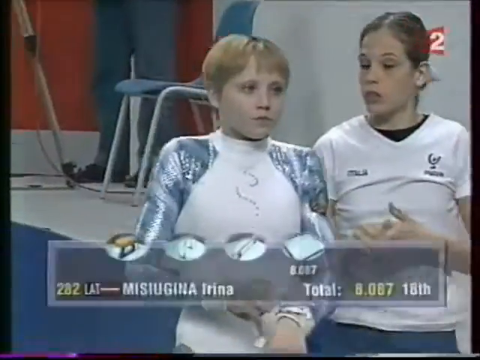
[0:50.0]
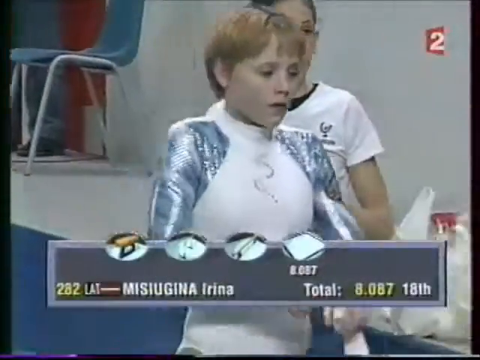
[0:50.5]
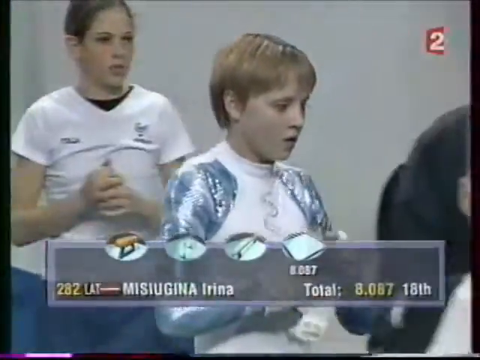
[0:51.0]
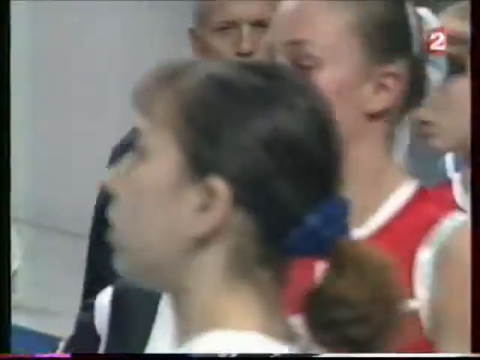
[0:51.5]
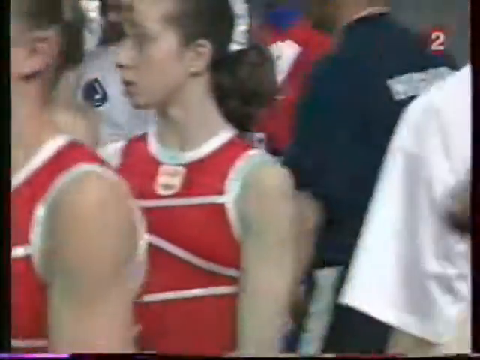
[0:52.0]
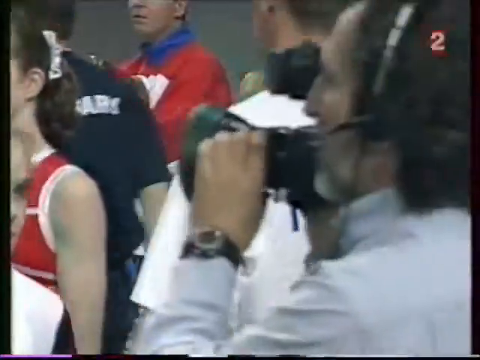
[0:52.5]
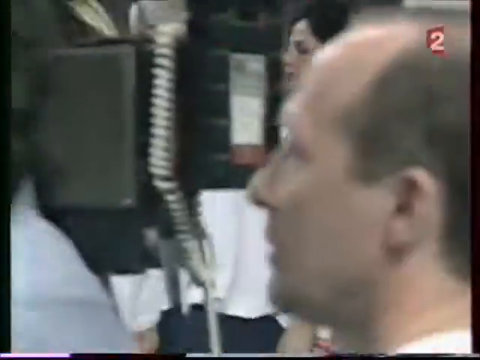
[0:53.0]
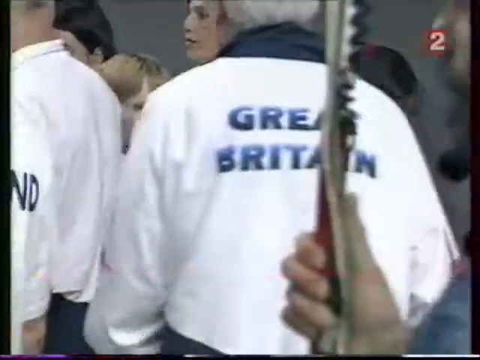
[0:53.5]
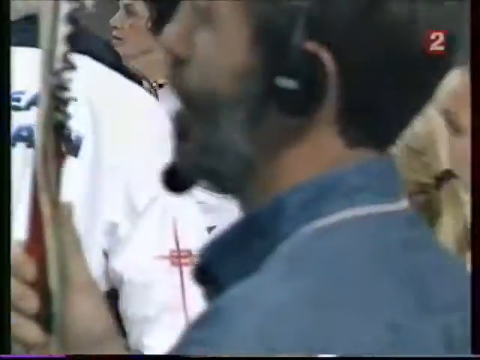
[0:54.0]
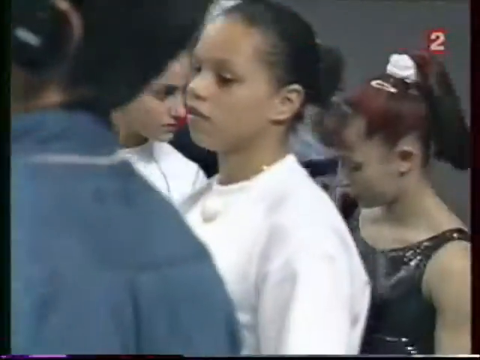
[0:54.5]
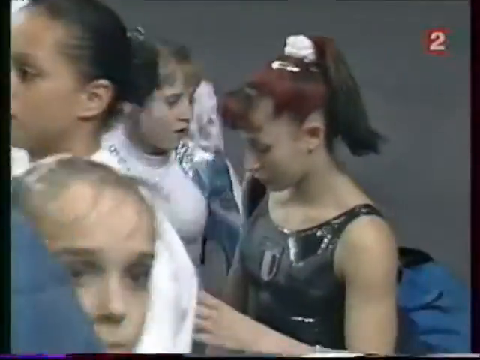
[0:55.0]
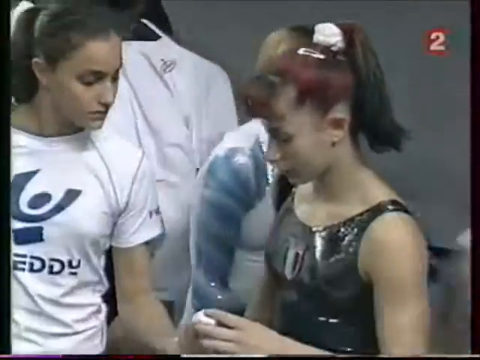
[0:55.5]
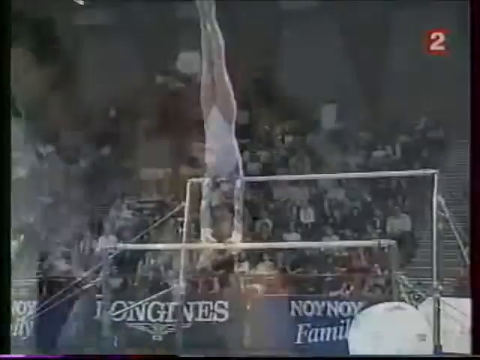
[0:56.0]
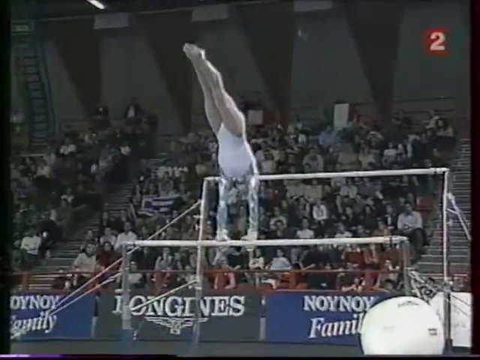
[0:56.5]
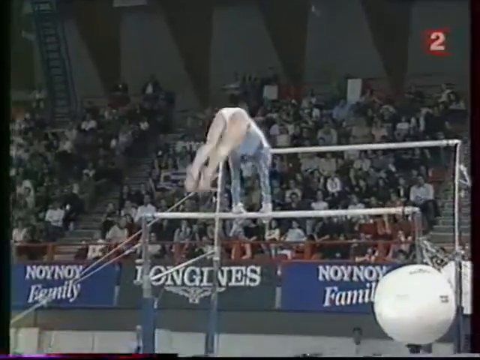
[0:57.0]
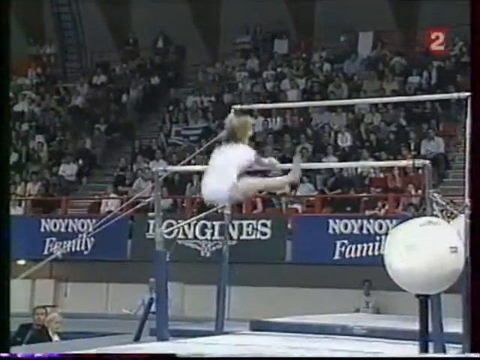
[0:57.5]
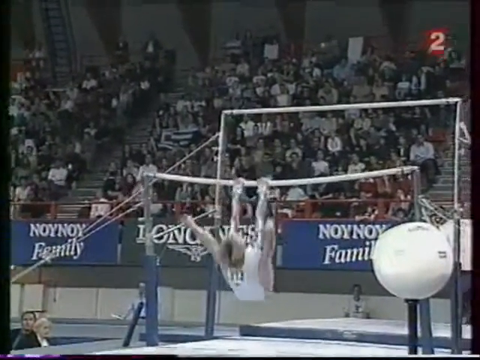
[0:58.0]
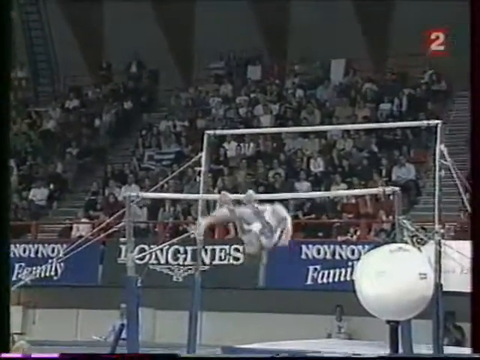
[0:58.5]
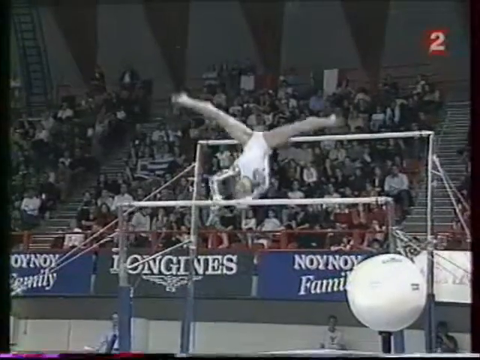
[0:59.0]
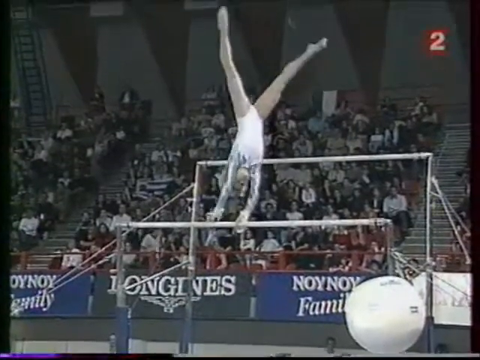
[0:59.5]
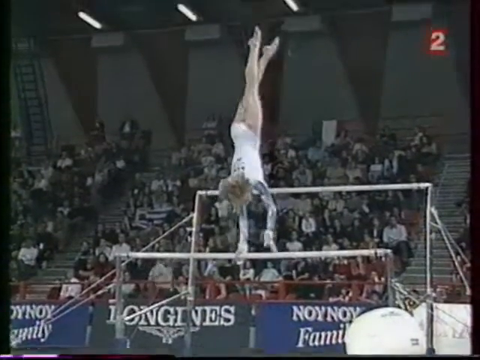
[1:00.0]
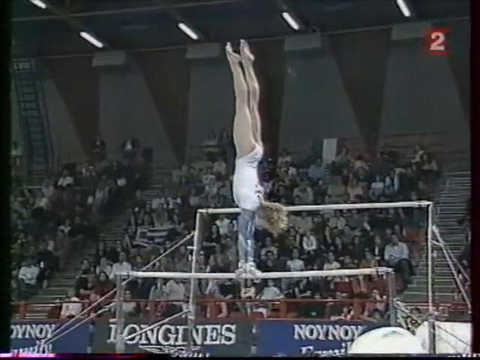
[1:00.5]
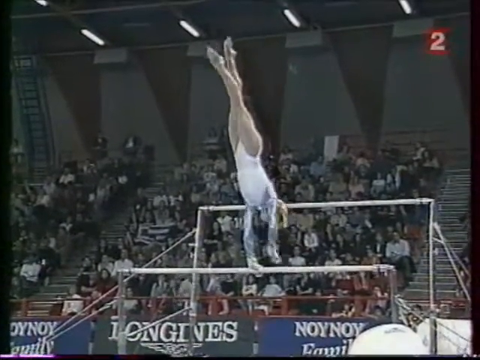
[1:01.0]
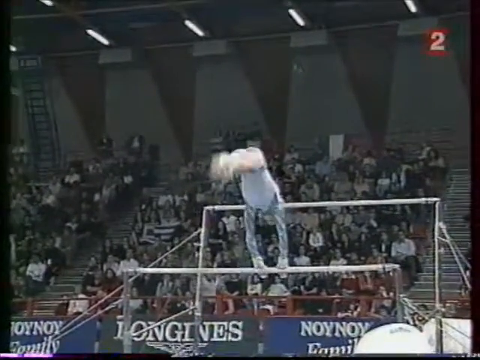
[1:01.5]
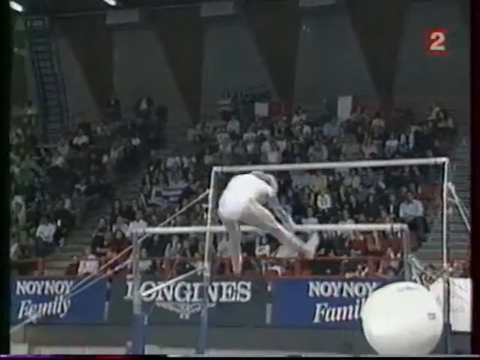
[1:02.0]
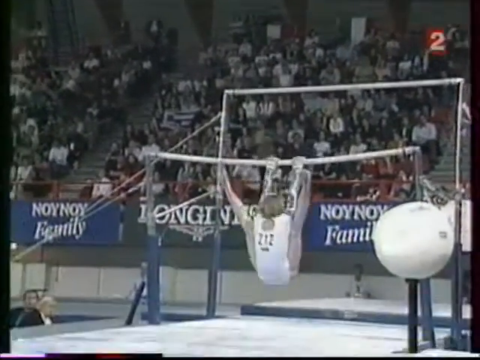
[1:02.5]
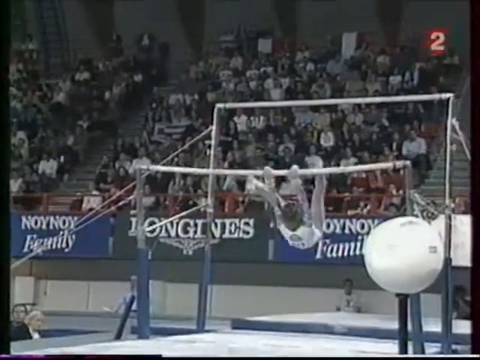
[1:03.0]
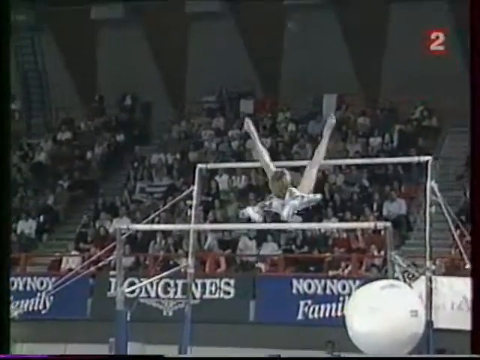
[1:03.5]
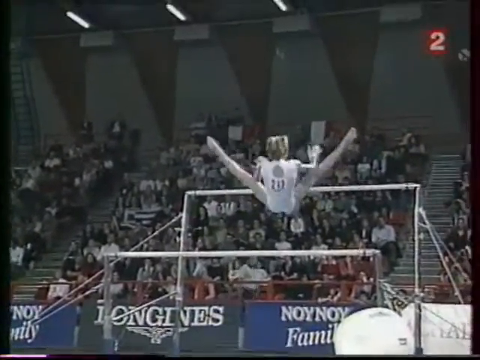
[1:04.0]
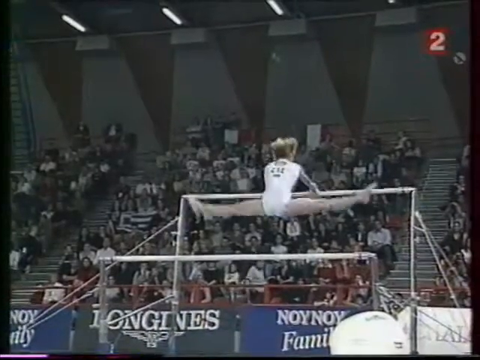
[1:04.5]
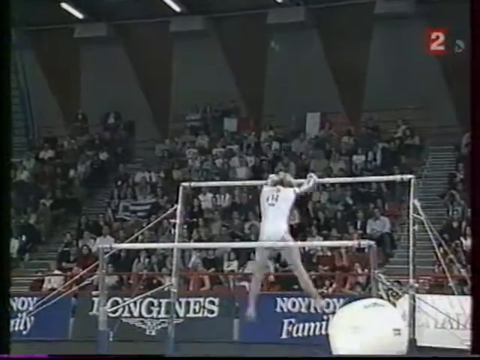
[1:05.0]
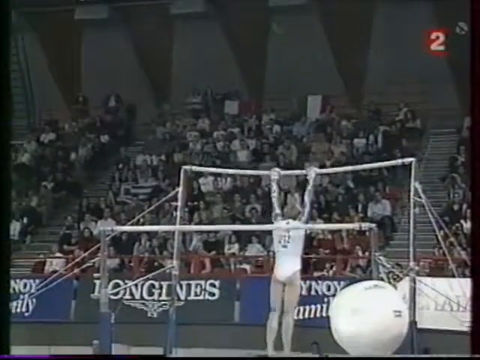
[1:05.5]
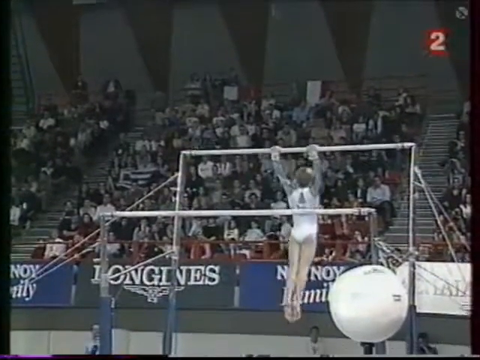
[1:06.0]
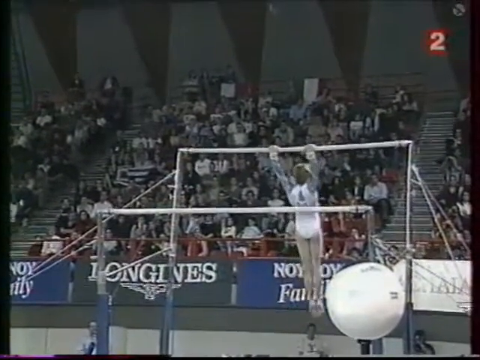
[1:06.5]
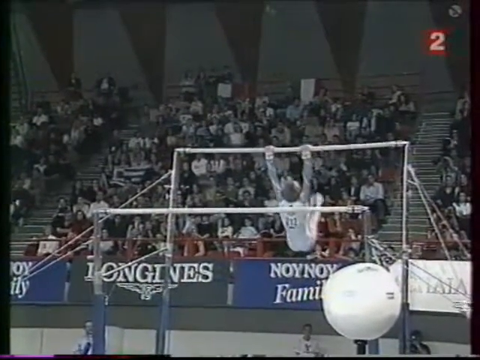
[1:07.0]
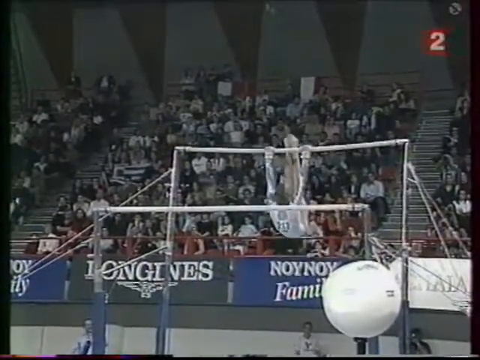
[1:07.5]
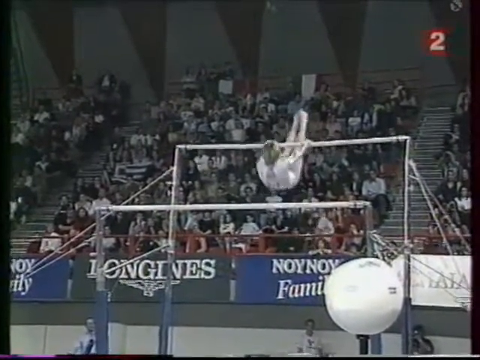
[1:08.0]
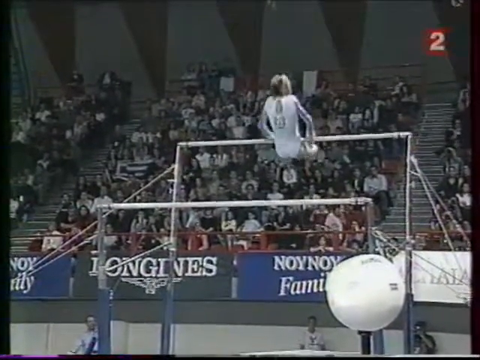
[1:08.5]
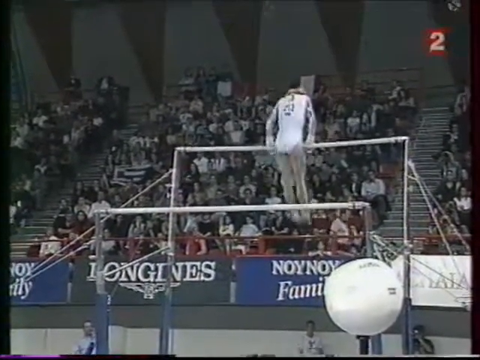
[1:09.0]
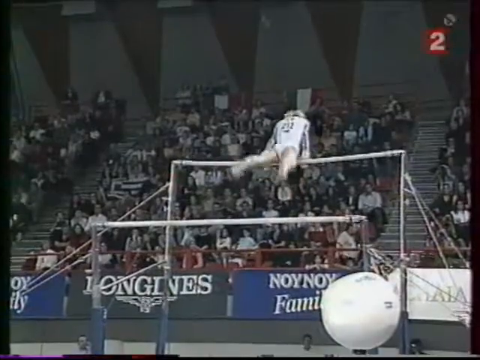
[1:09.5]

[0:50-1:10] The gymnast who just competed is shown; she has short, reddish hair cut almost like a boy's. A girl to her right has her hair pulled back, holds one hand in the other, and wears a basic white shirt with some writing on it. A box at the bottom of the screen reads "misiugina irina" and shows a total of "8.087" in yellow, along with what appears to be 18th place. The gymnast pulls off some kind of wrist guard and walks quickly past a couple of apparent cheerleaders in red cheerleading outfits and some media. She is hard to see because she is short and many people are standing around the gym getting ready. A slow-motion highlight then shows her on the short bar, rotating her hands as she comes through and doing the splits as she catches herself. Powder on her hands can be seen flying off as she holds on to the bar.